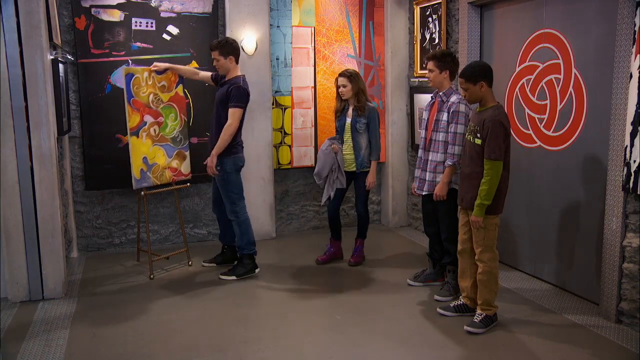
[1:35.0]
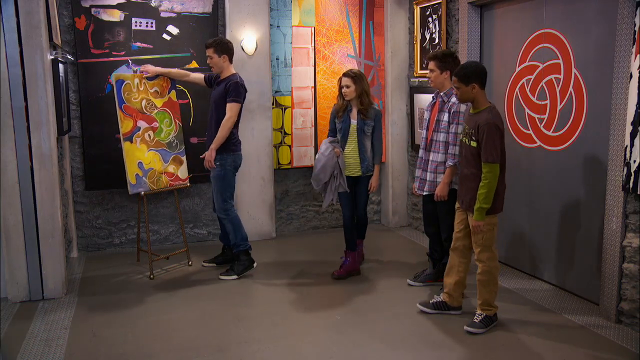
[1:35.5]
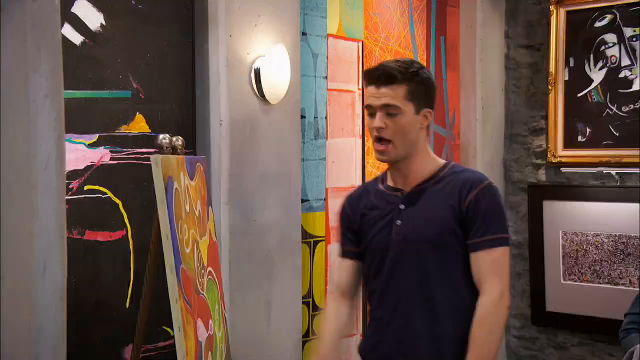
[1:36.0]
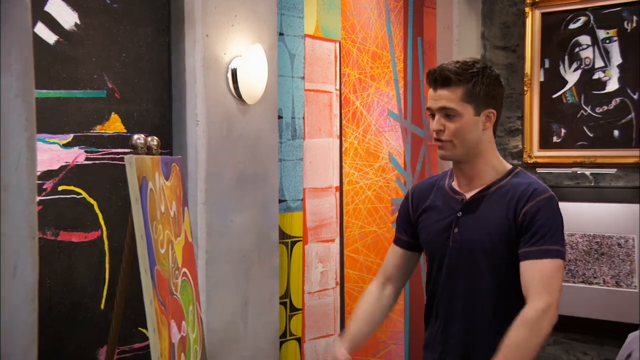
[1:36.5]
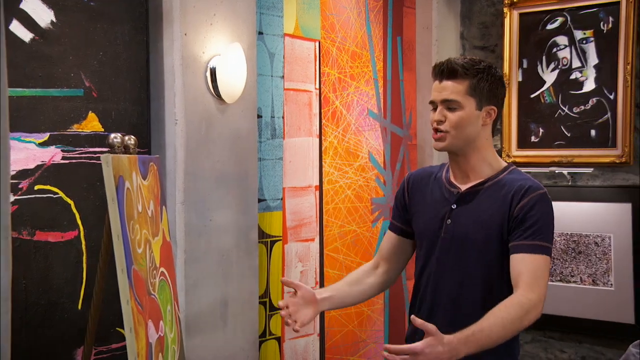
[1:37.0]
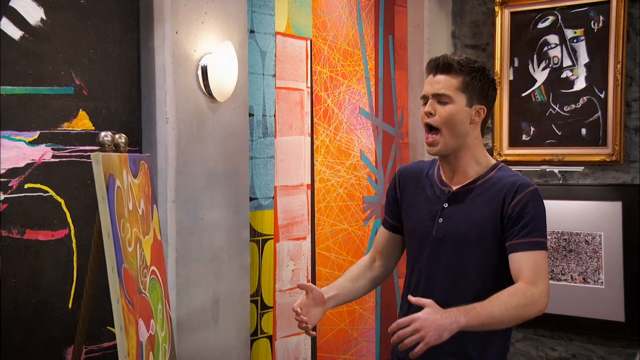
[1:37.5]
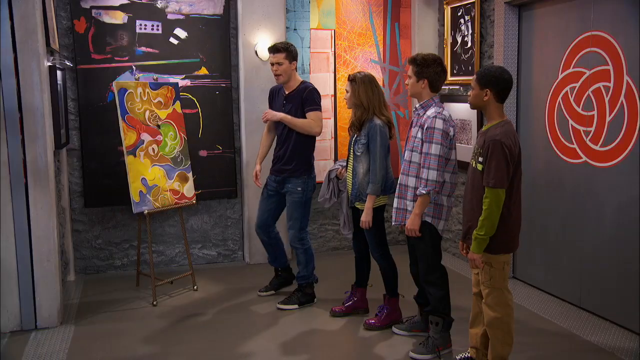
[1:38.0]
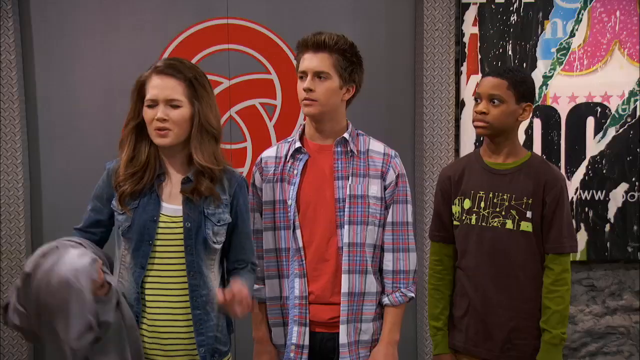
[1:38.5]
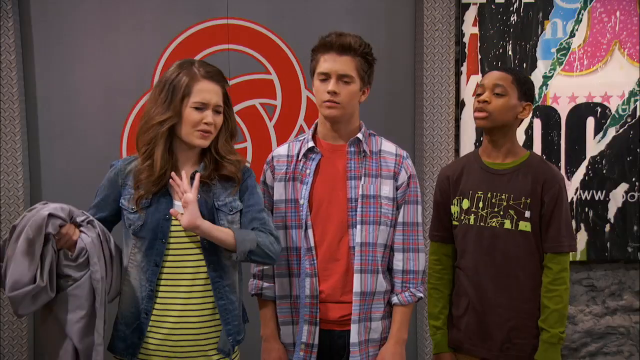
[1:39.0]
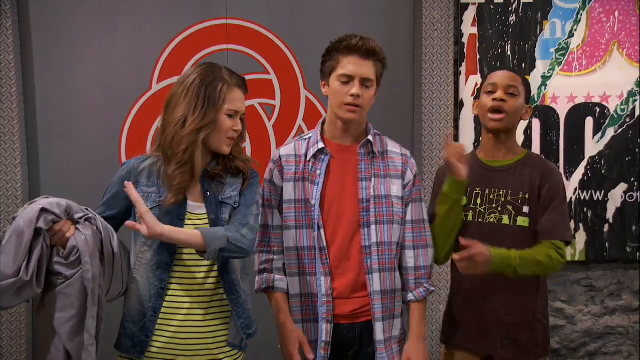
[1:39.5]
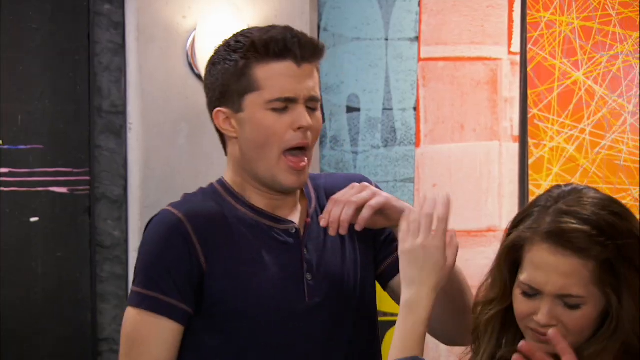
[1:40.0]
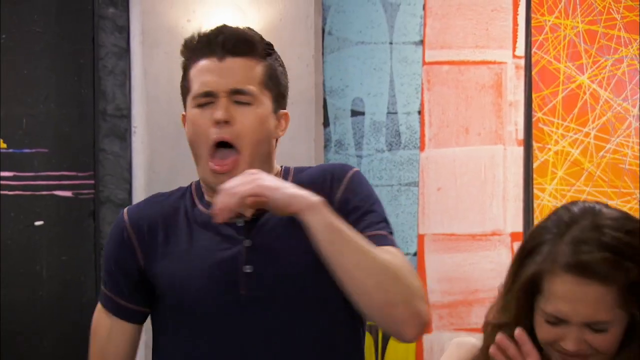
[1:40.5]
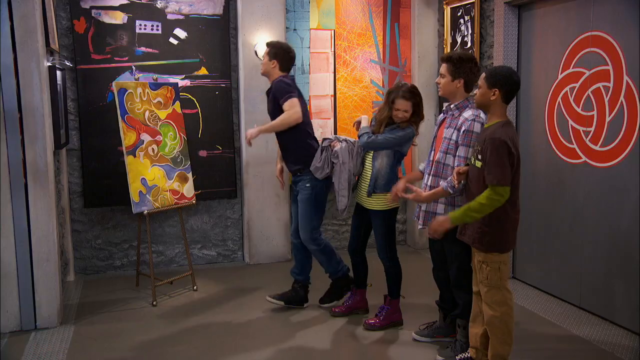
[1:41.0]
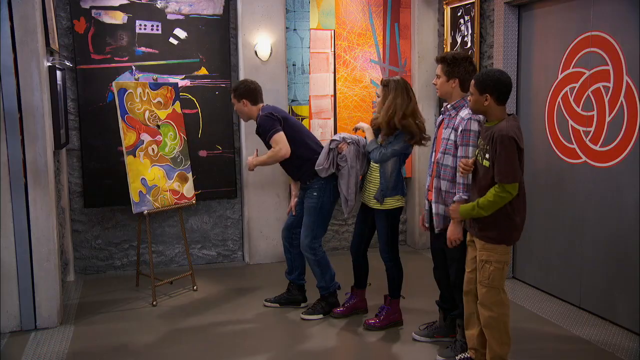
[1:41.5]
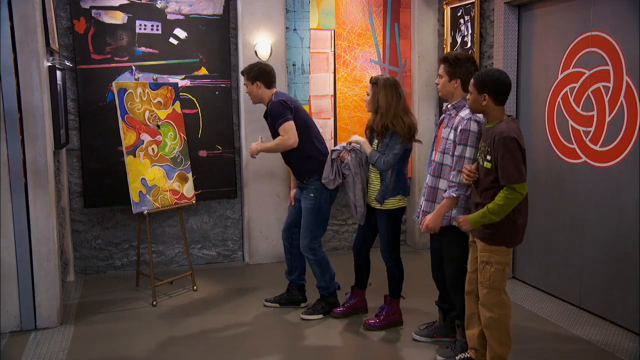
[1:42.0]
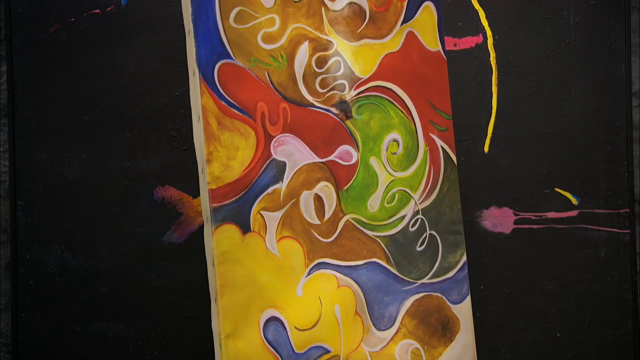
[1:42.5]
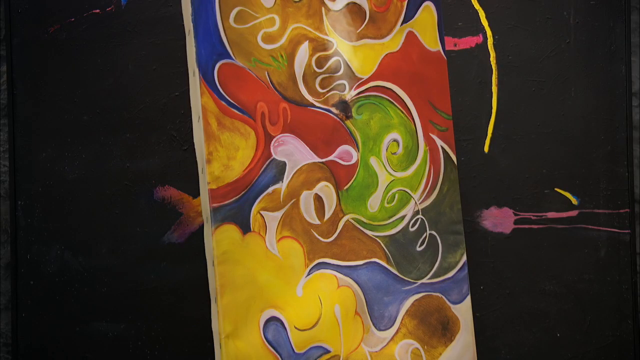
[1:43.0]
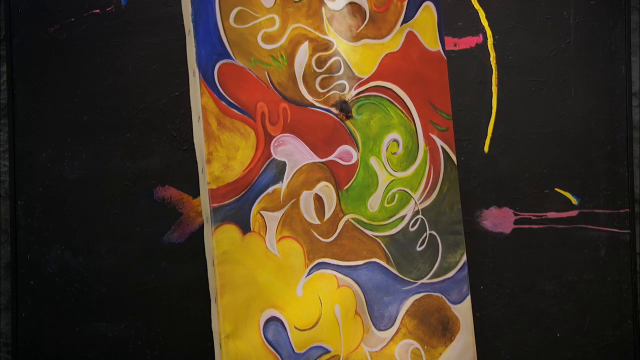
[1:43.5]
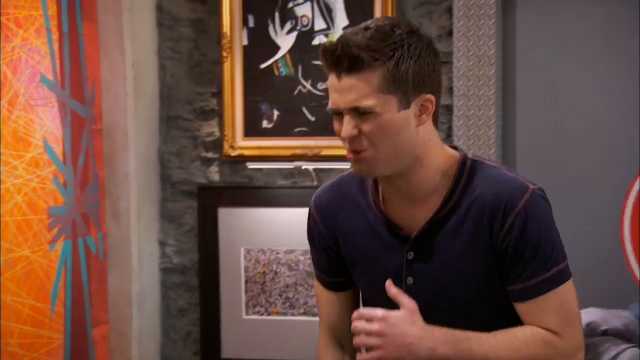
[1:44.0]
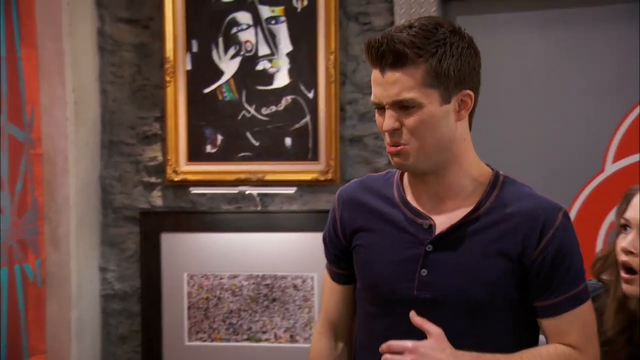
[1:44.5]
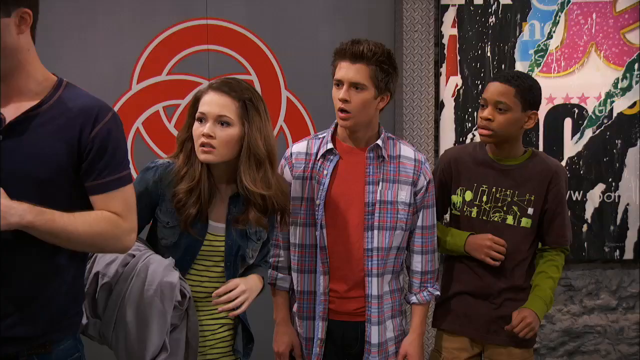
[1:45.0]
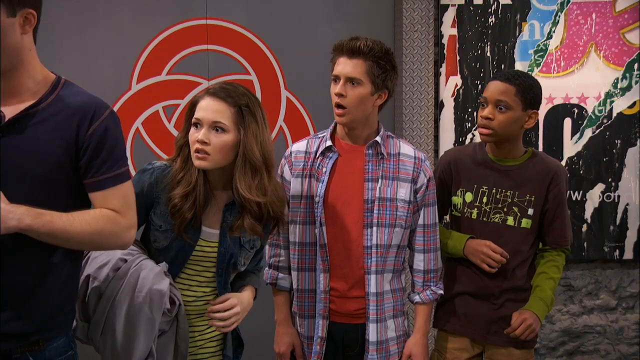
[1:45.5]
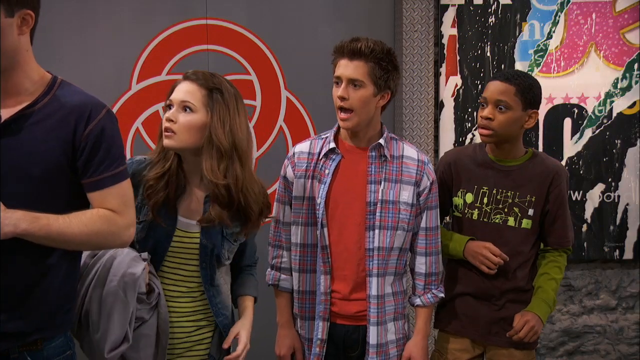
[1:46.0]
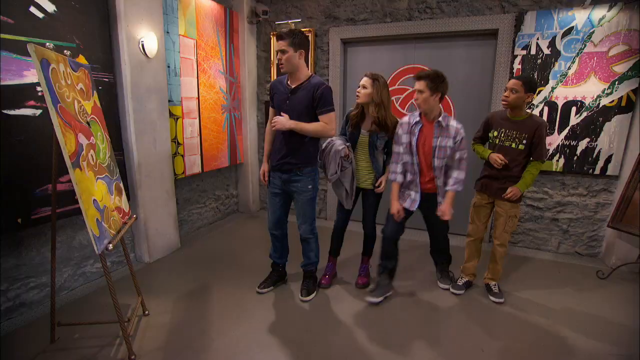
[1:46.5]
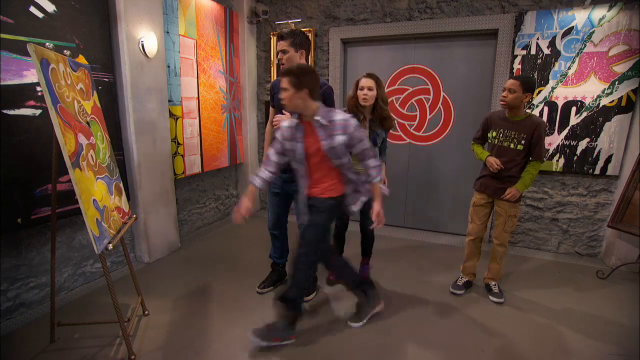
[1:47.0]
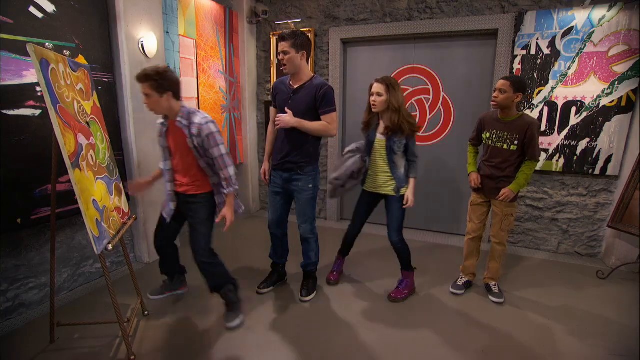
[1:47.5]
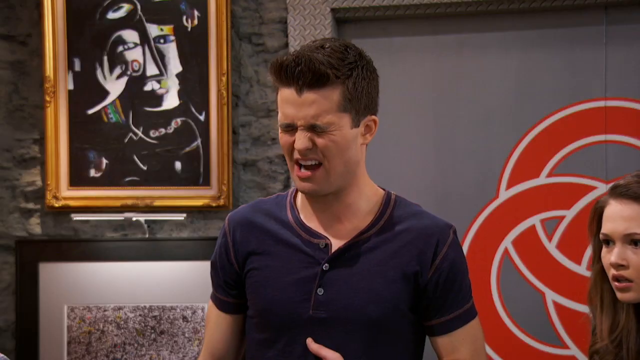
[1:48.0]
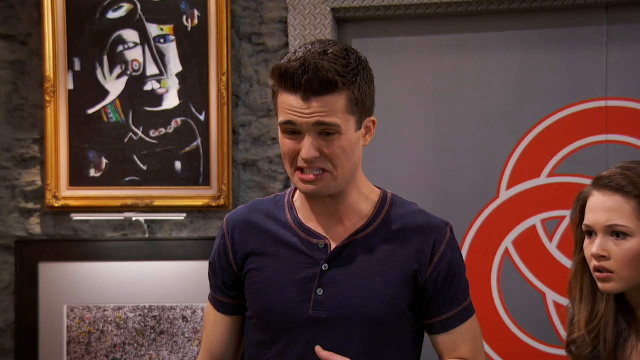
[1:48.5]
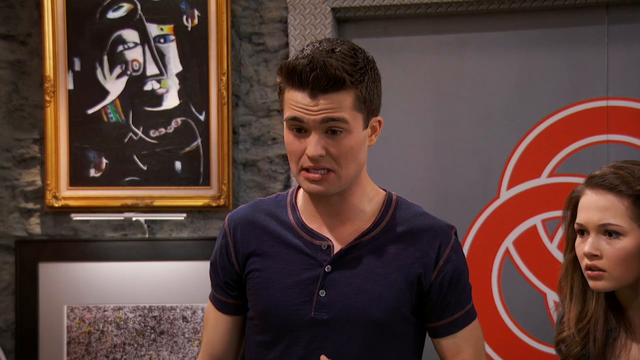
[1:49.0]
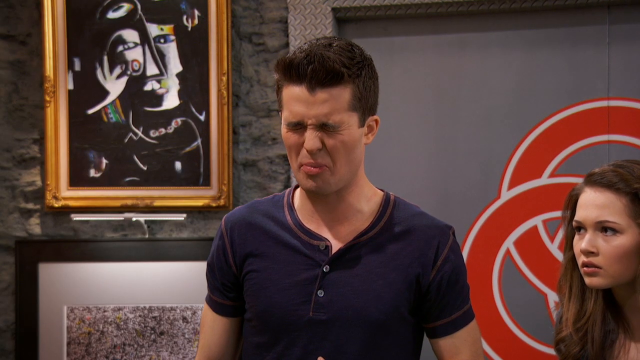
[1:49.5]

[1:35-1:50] The man in the navy shirt steps forward and puts the painting on an easel in the center of the room while the other three teenagers stand next to him. He moves back to look at it, revealing the walls behind them, where more large paintings are displayed all along the walls, and a large elevator door. He adjusts the painting and turns to talk to the three teens. He prepares to sneeze, and they gesture as though they want him to turn away and not sneeze toward them. He turns and sneezes, and a special effect makes it look as though he has zapped the painting with a laser. He steps back and they are all surprised: there is now a burn hole in the painting. The teenager in the plaid shirt steps forward to examine the burn hole more closely as they all stand around in the gallery. The other paintings on the walls vary, including two smaller paintings hanging one over the other and larger paintings, a mix of abstract works and typography, with letters and various numbers on canvas.